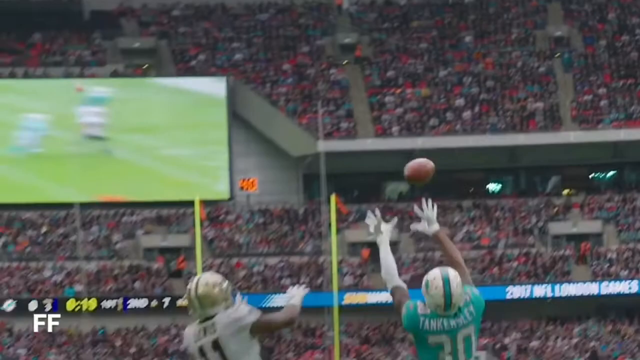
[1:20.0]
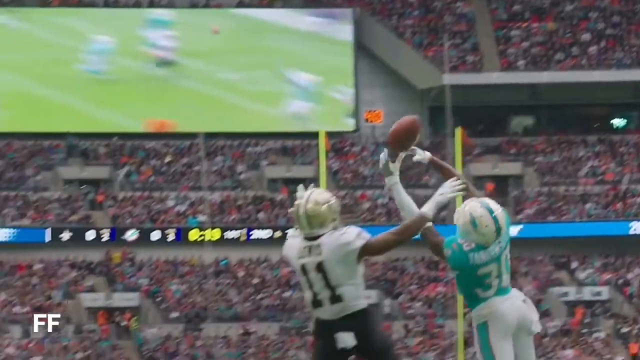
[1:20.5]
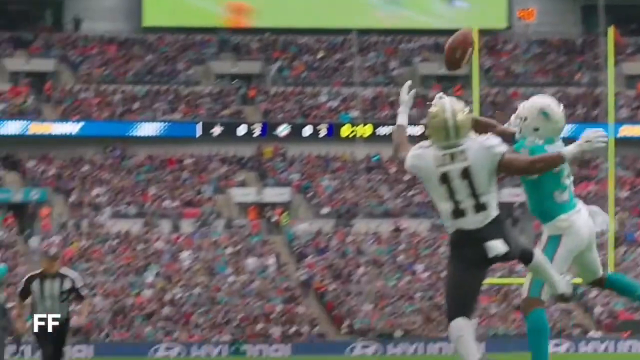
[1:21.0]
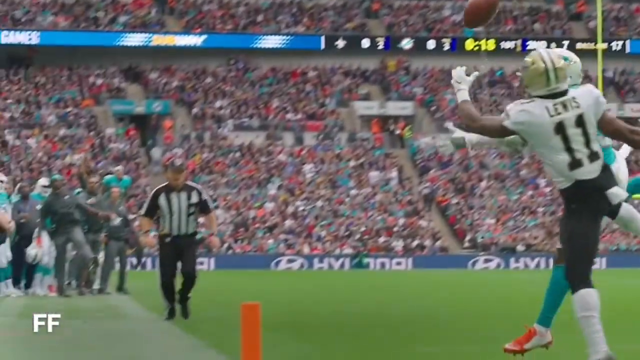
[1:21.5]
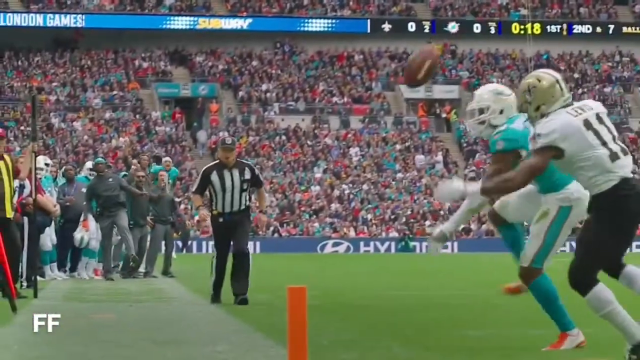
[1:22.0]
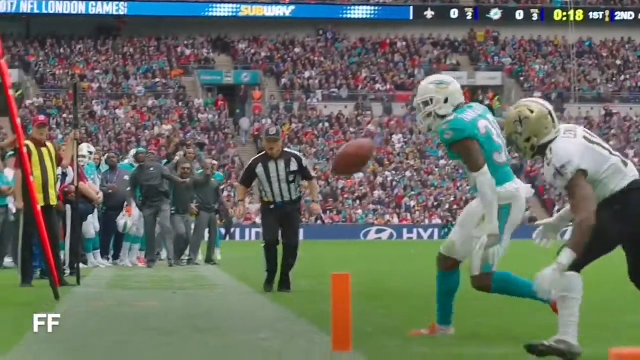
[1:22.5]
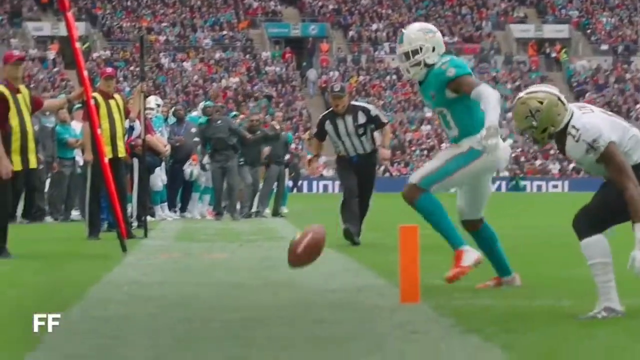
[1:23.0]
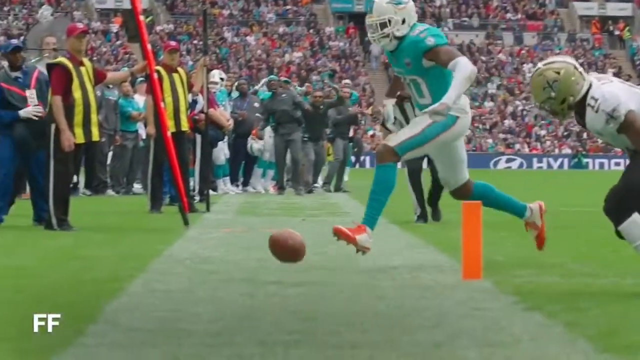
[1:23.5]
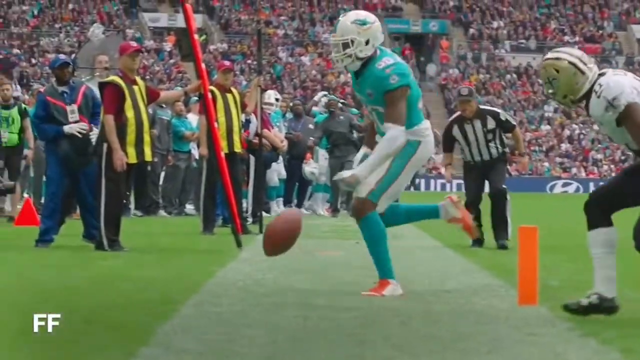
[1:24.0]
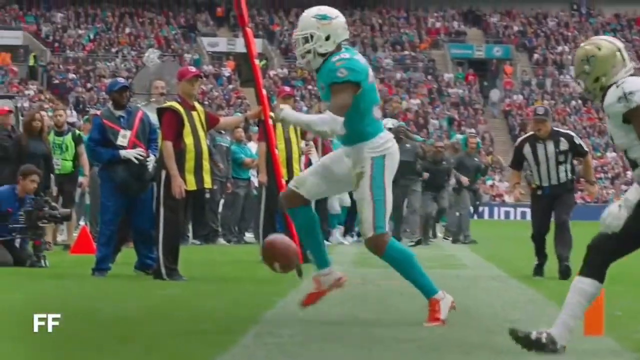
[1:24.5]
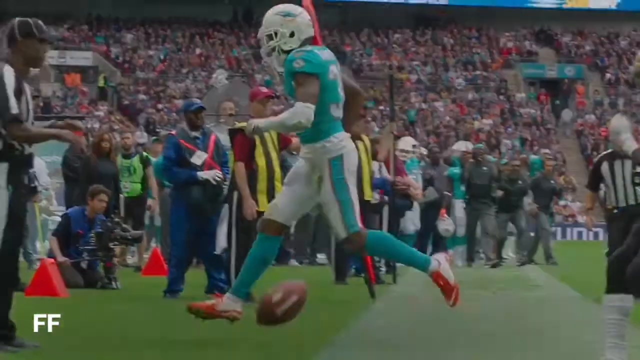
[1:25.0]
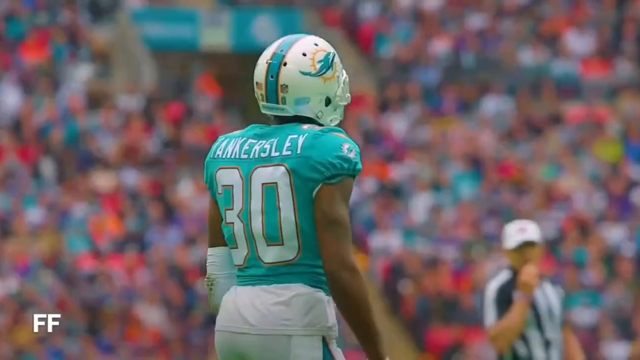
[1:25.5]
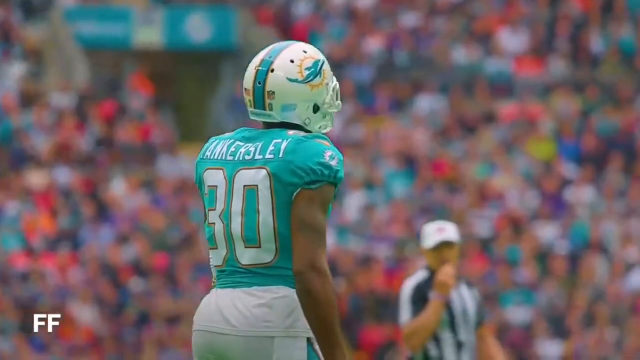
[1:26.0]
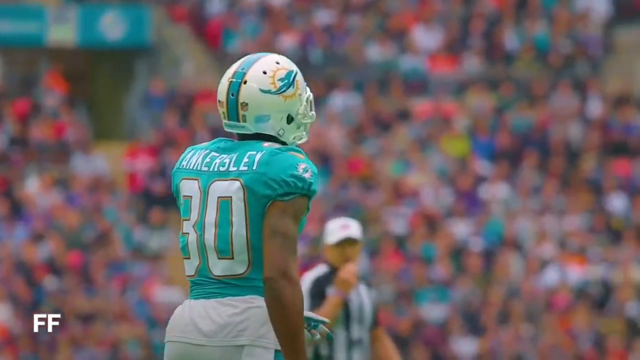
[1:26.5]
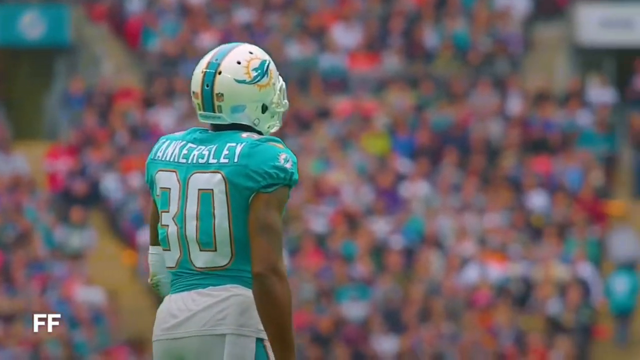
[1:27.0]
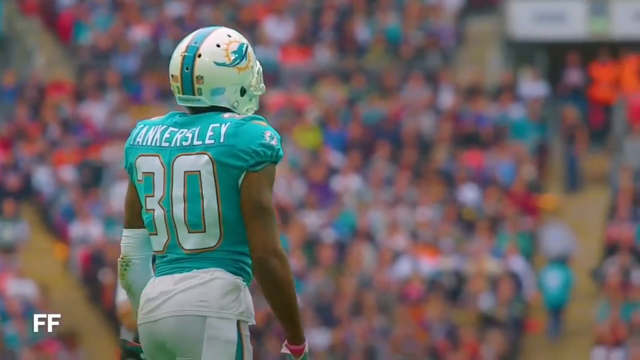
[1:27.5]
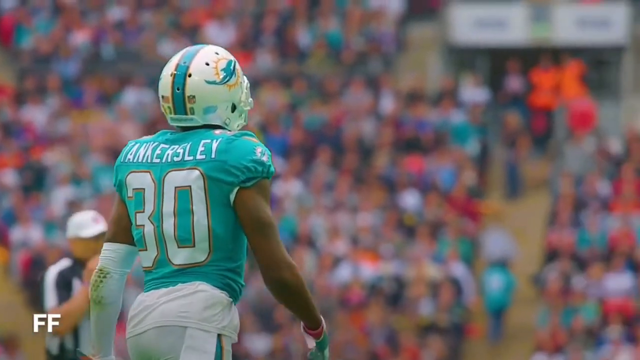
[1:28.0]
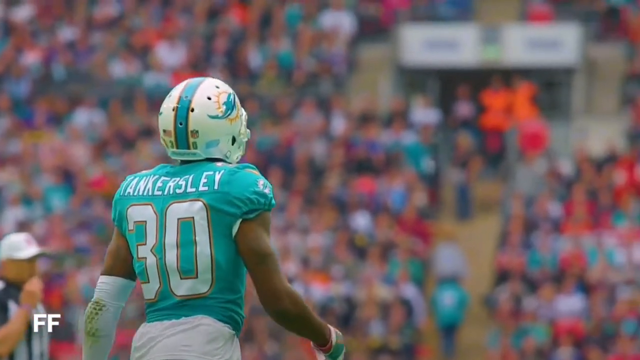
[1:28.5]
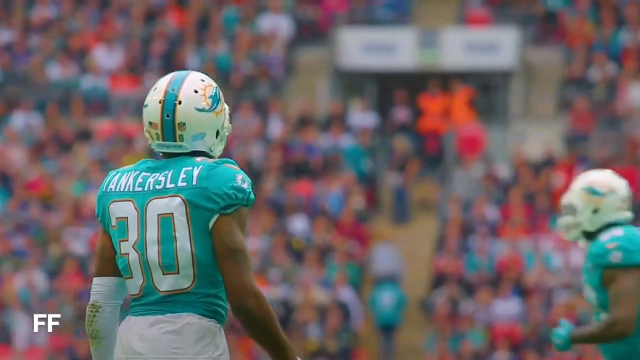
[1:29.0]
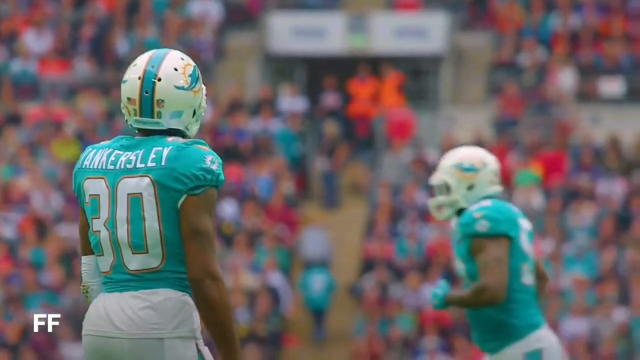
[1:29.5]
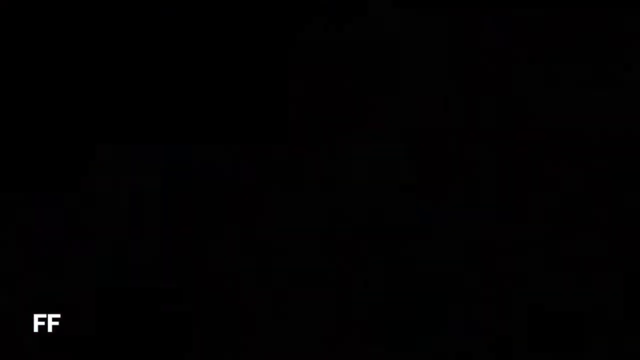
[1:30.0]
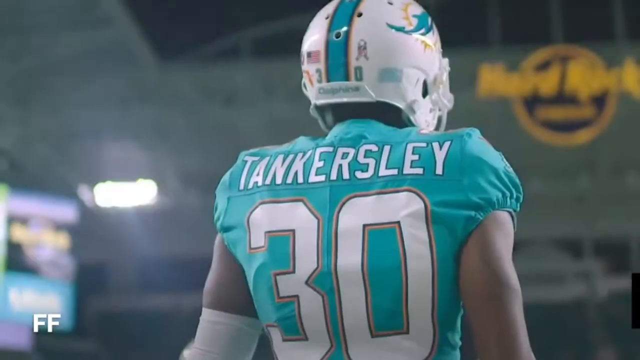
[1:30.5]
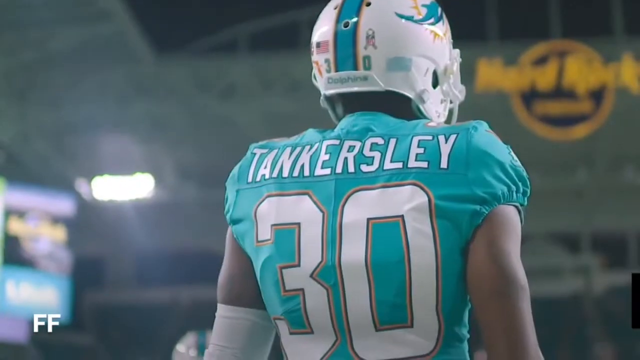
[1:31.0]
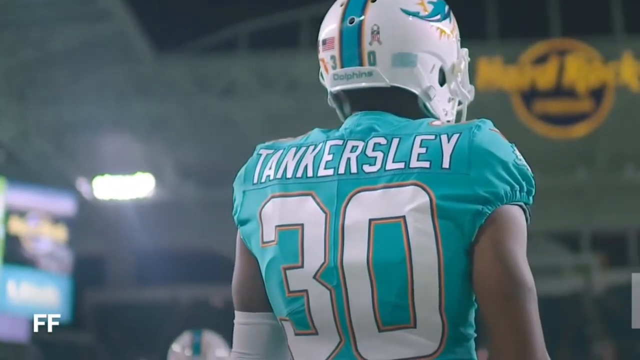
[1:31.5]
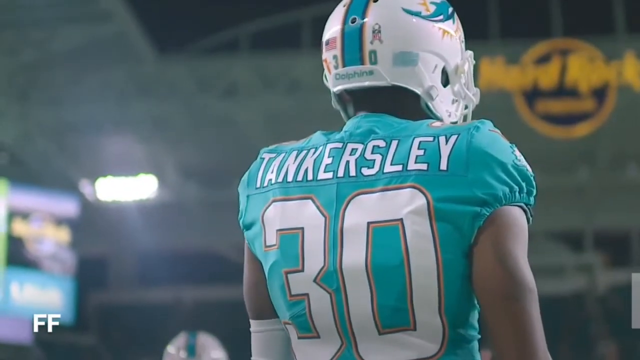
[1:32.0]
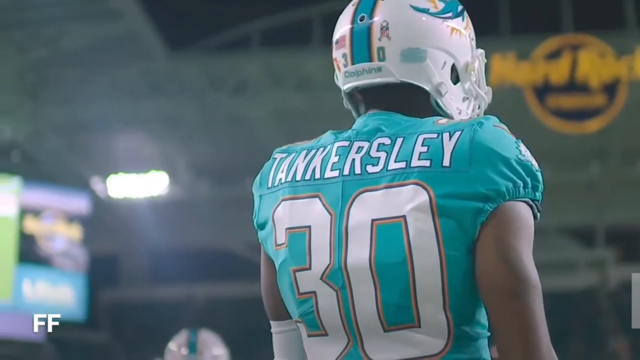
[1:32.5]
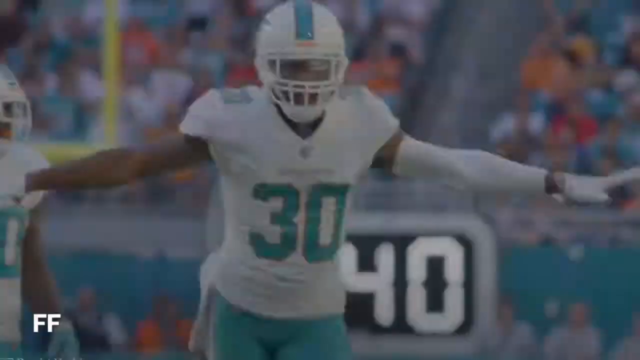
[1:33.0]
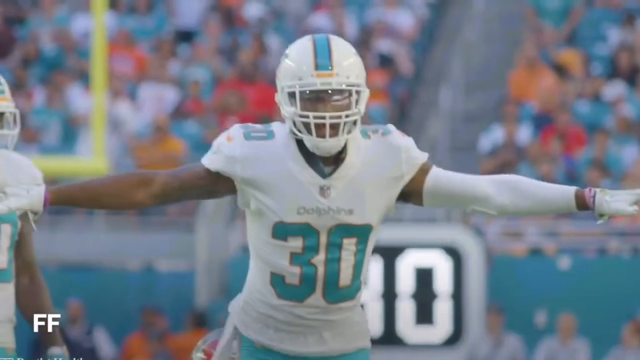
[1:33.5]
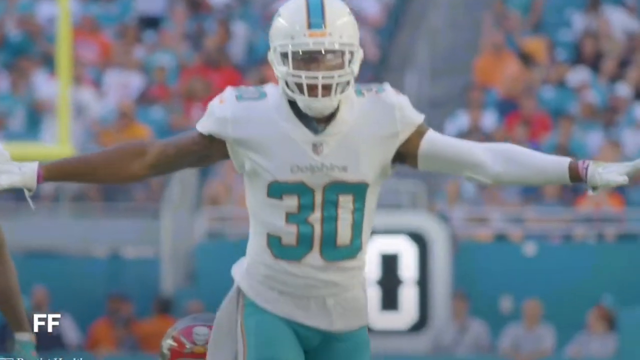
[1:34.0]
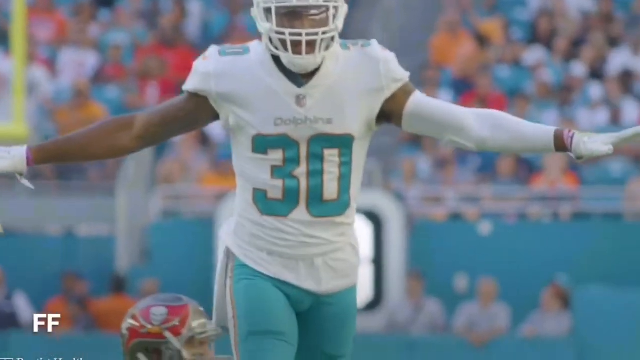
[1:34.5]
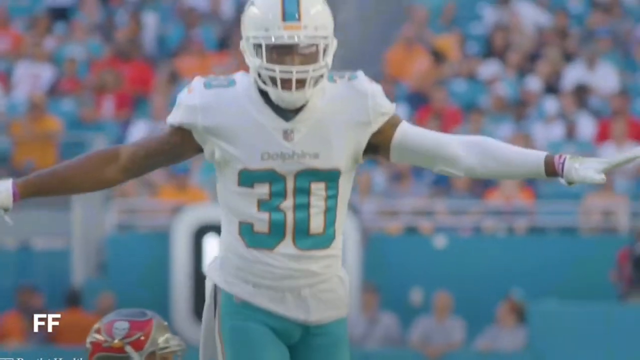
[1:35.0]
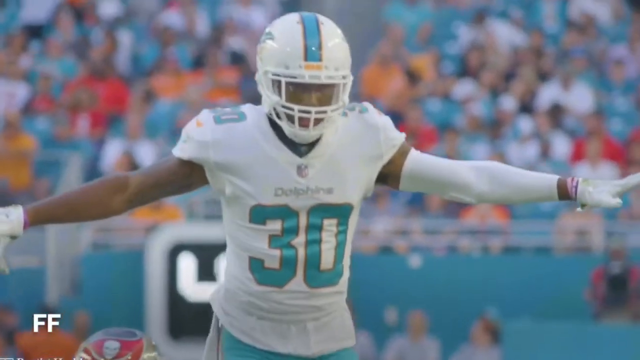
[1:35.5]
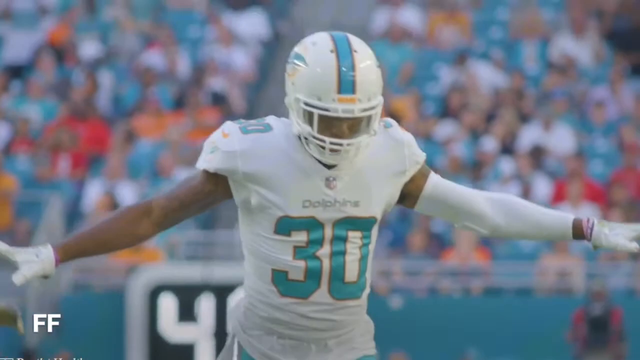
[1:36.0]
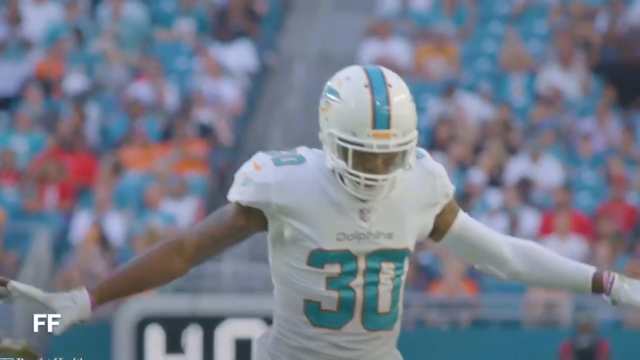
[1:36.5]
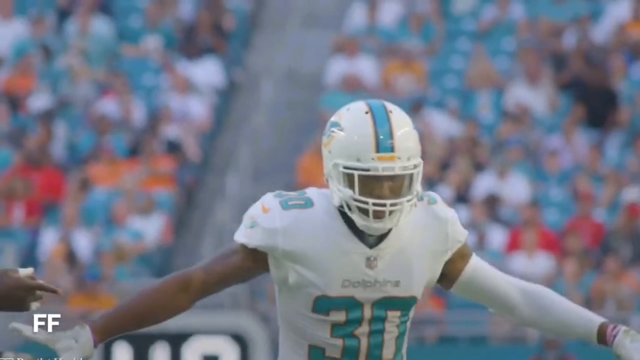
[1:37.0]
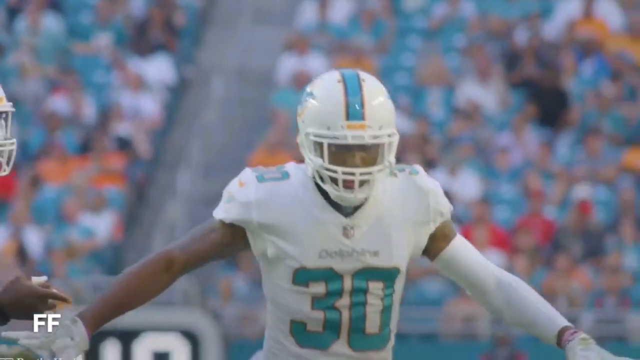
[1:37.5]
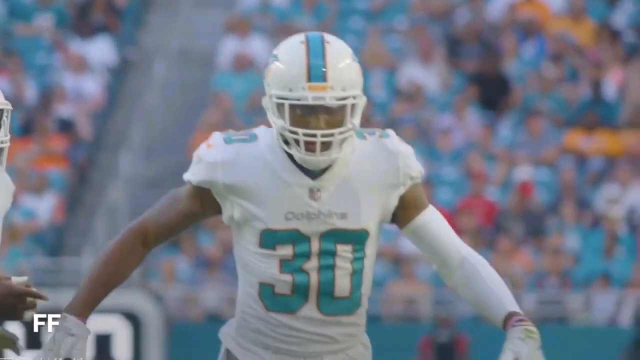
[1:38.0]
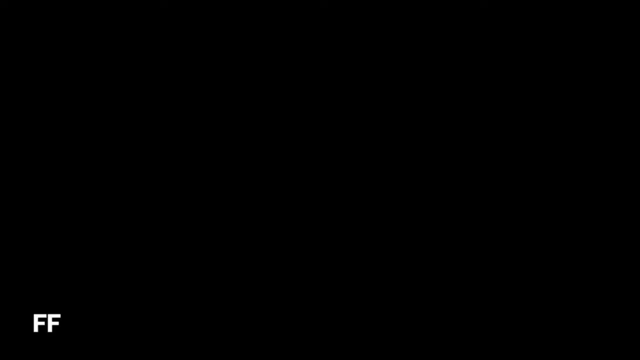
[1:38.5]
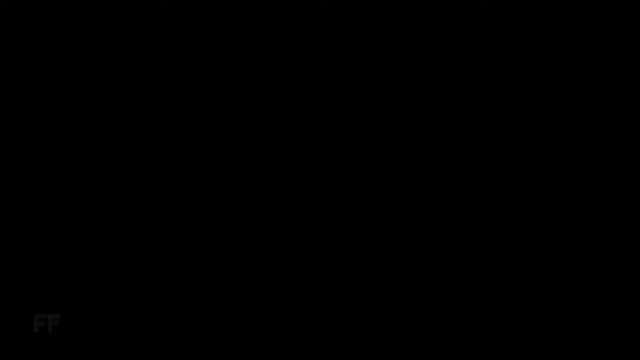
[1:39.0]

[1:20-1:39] Someone intercepts a pass: Tankersley, number 30 for the Miami Dolphins. Slow-motion footage follows of Tankersley celebrating and flying through the air. A large widescreen TV is in the stadium right behind the fans, and in the middle of the stadium there is apparently a scoreboard, hard to see, showing the score and the time remaining. The stadium is very busy.